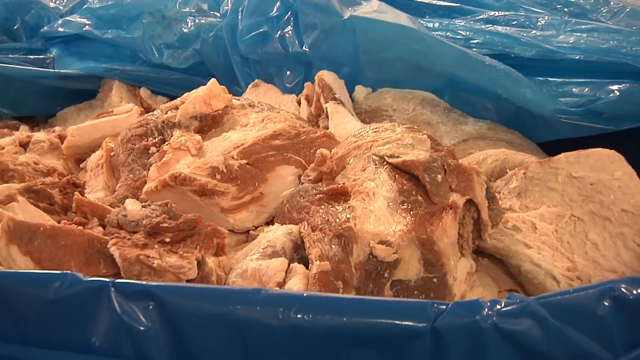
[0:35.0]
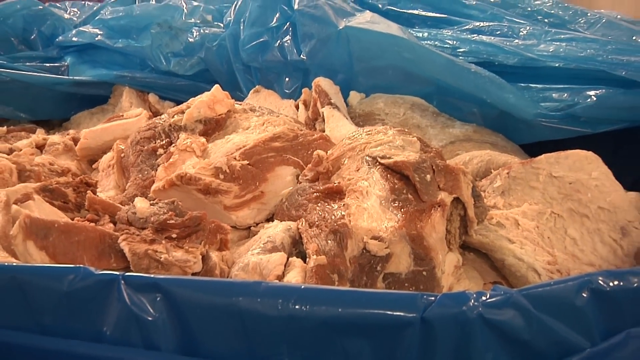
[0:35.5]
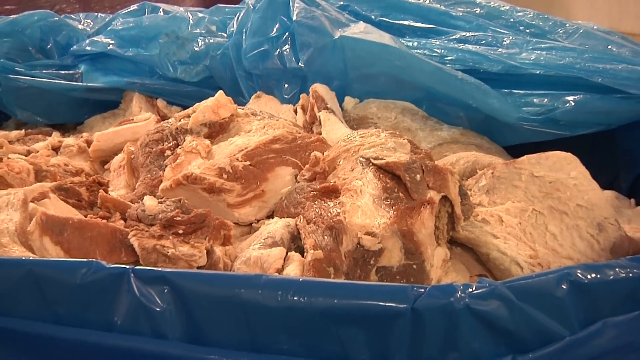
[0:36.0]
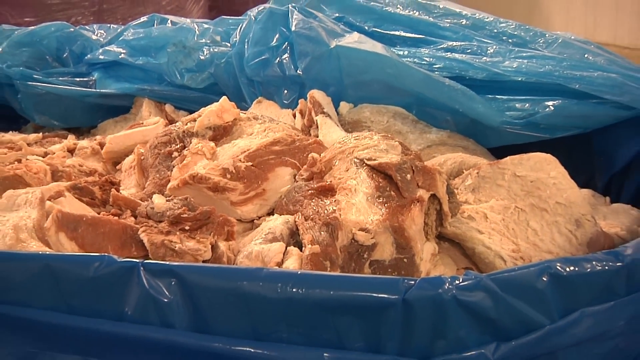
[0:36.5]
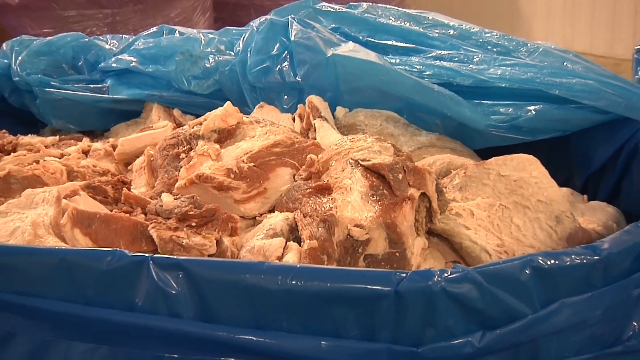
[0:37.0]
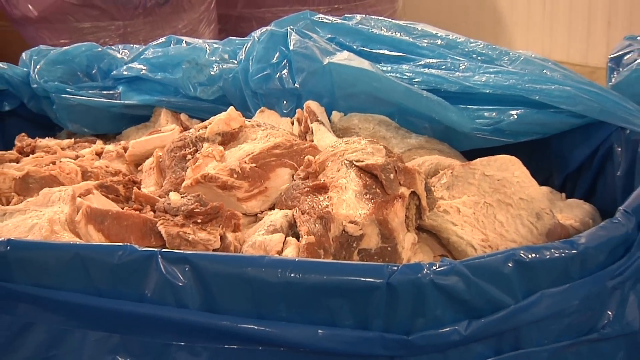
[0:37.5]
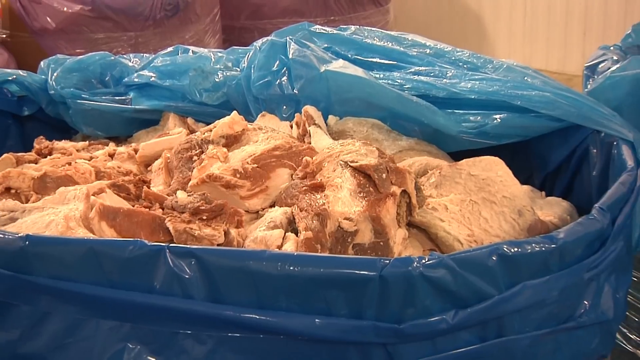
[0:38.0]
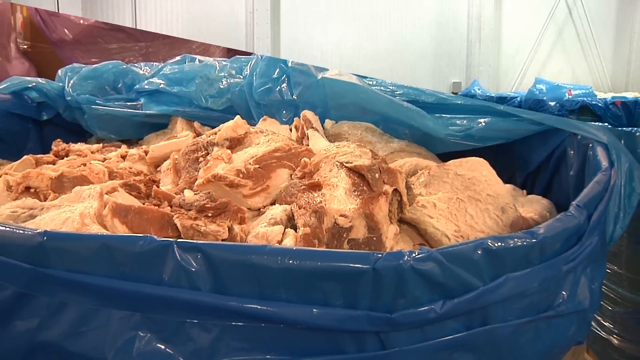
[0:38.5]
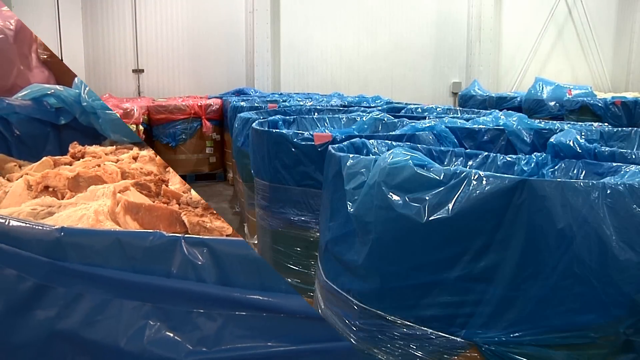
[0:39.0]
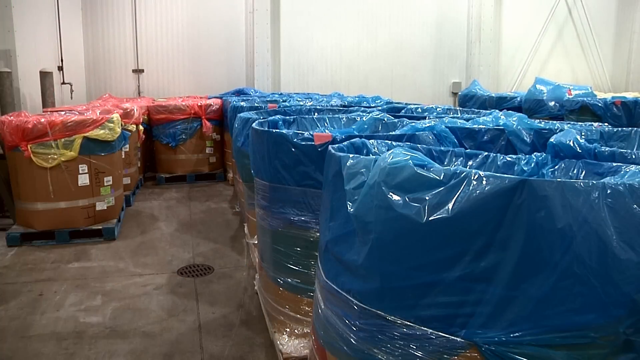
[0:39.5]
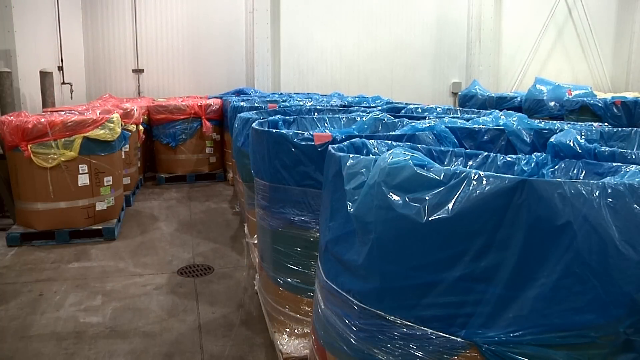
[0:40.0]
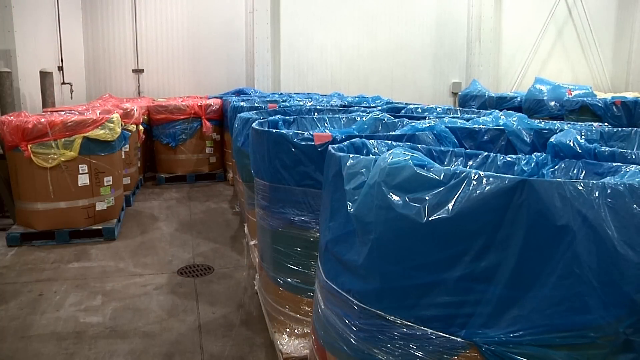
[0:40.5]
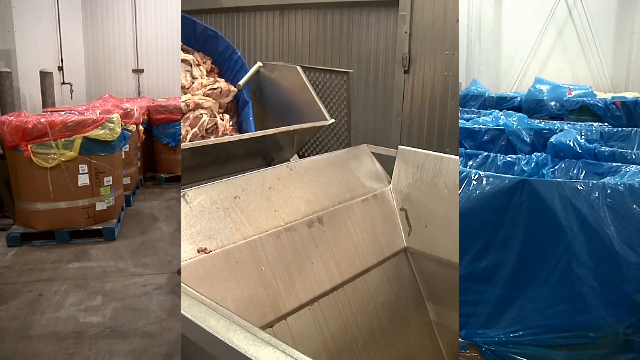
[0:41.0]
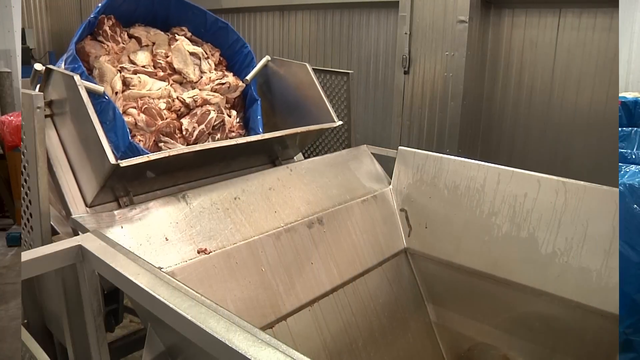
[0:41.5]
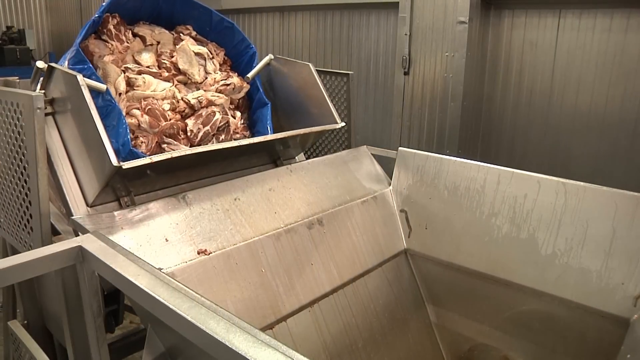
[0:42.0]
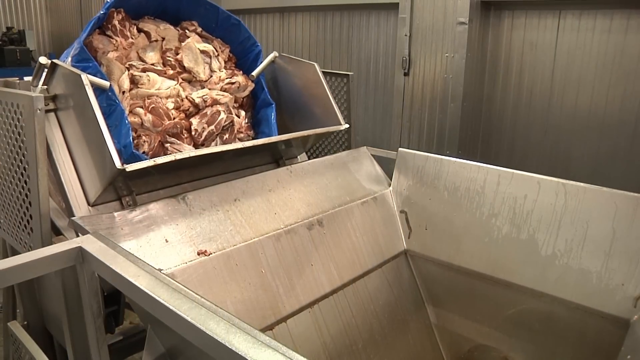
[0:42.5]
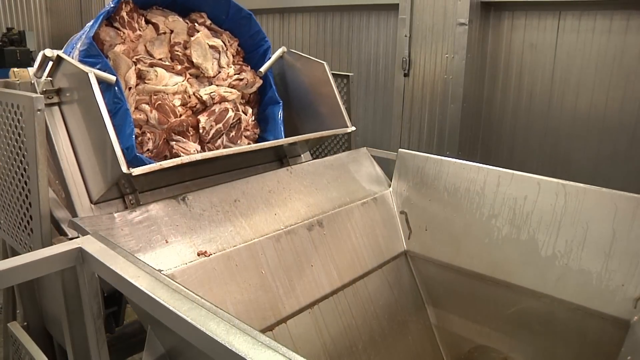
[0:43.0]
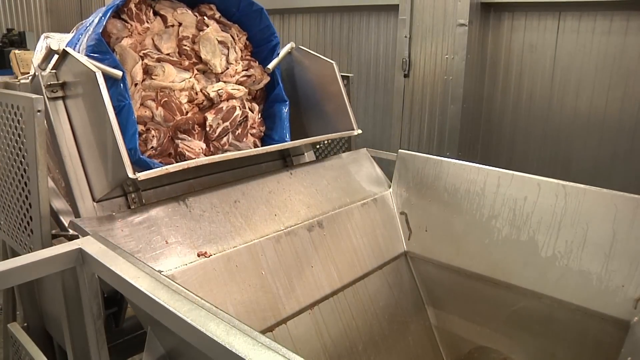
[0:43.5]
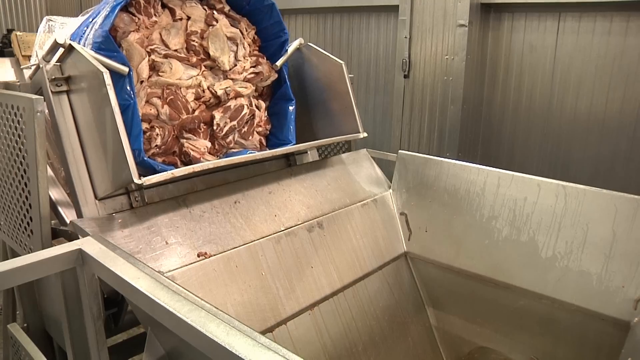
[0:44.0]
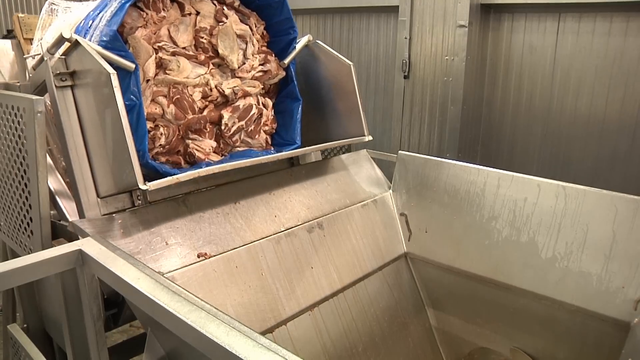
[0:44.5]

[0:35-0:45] The meat that has been sitting in the barrels appears about to be ground and processed further. The setting shifts from the holding area to what seems to be the warehouse floor. The color-coded bags are still visible, and some bags have multiple colors, so the colors possibly do not mean anything. An entire barrel is picked up and all of the meat is thrown into the processor.